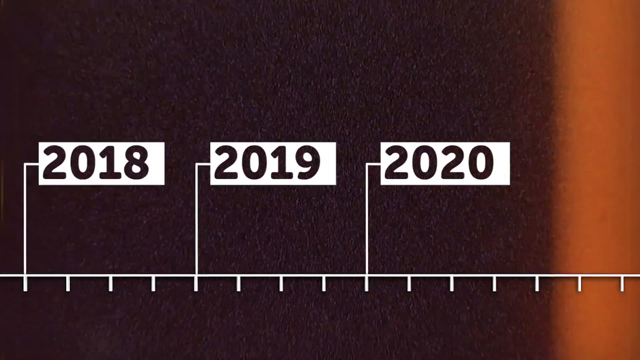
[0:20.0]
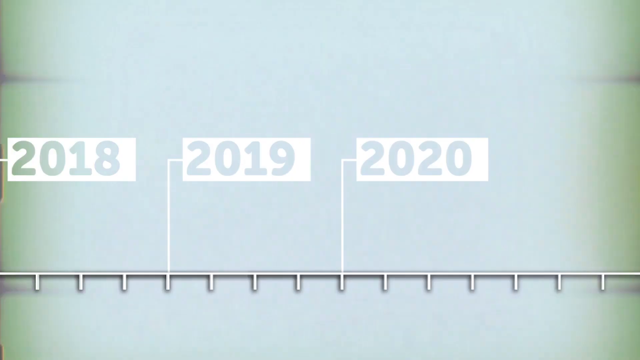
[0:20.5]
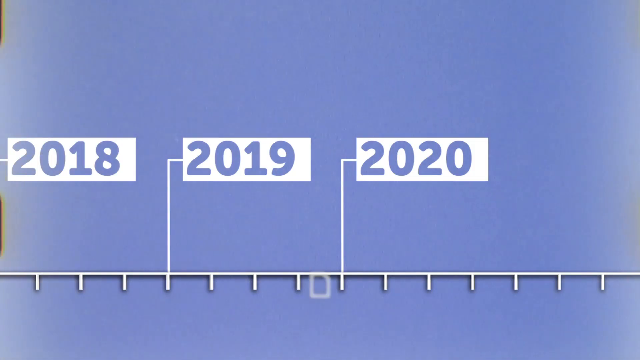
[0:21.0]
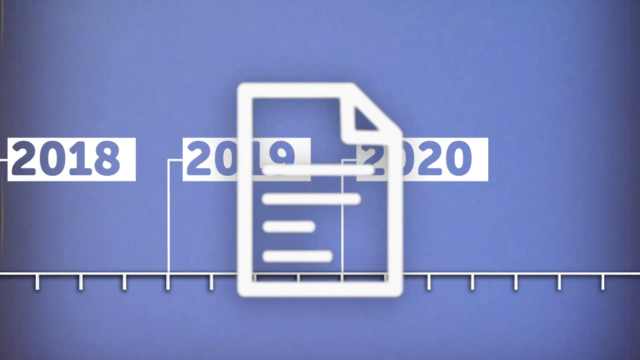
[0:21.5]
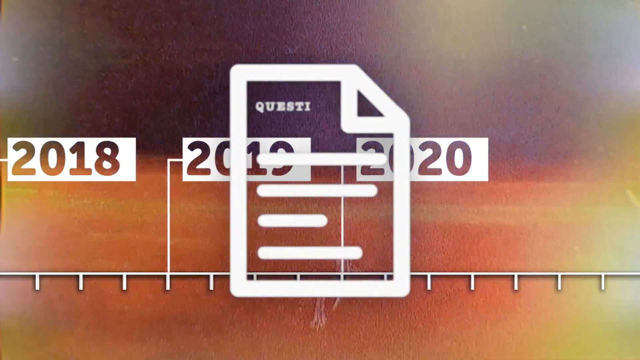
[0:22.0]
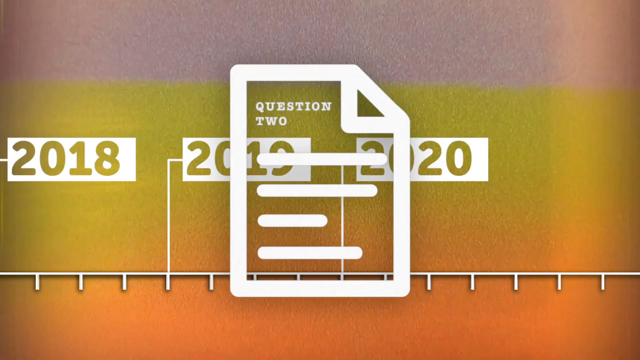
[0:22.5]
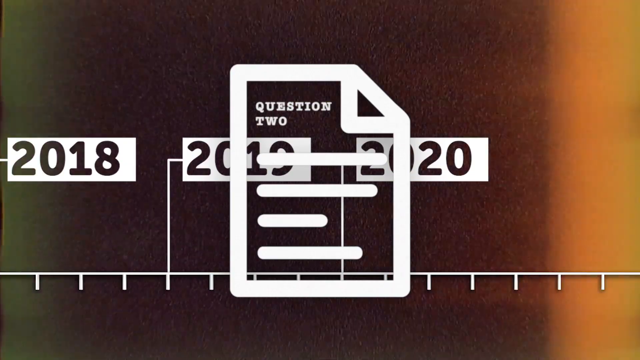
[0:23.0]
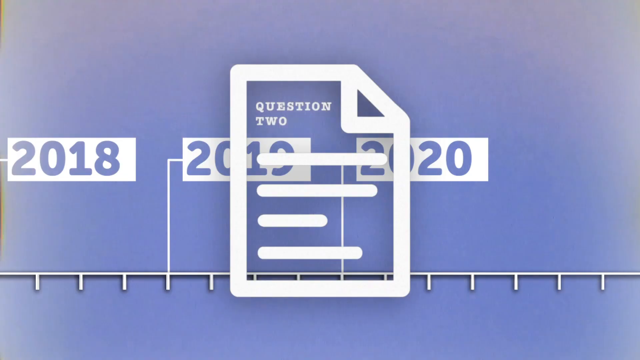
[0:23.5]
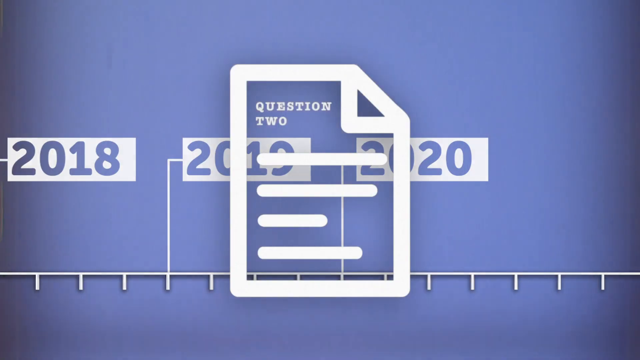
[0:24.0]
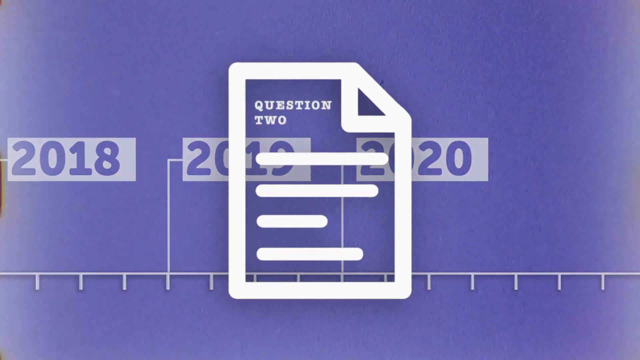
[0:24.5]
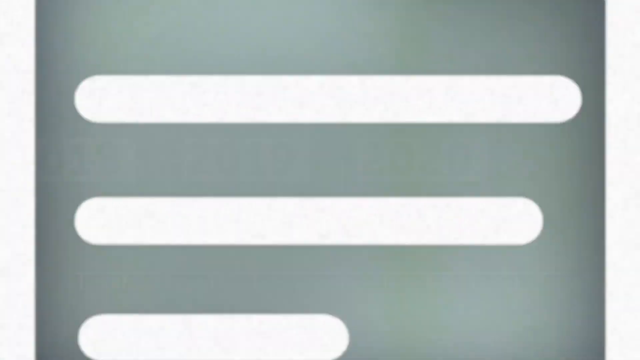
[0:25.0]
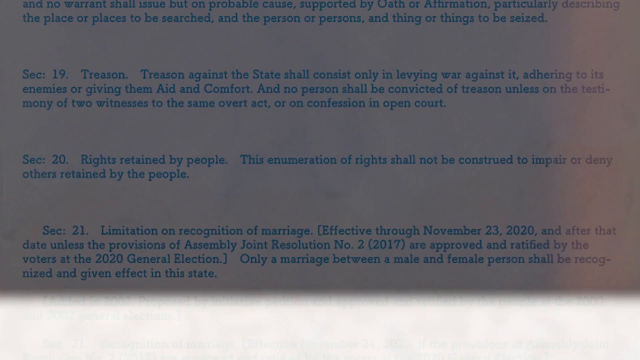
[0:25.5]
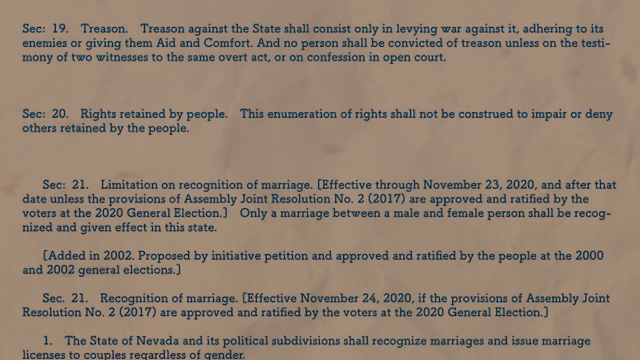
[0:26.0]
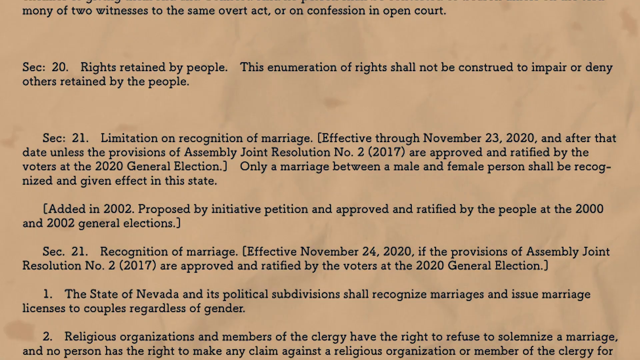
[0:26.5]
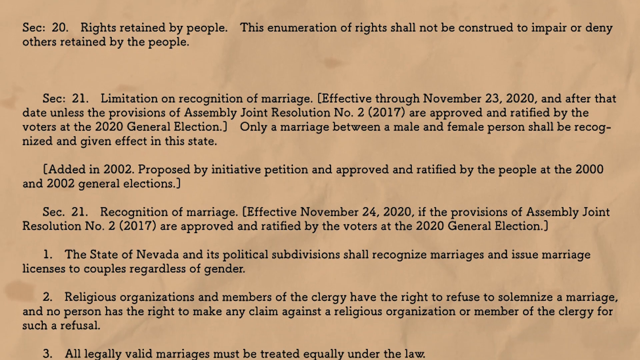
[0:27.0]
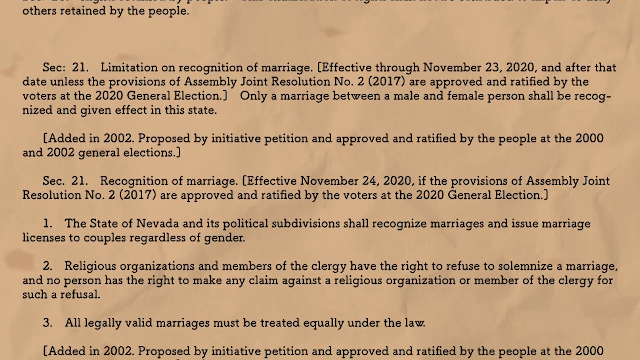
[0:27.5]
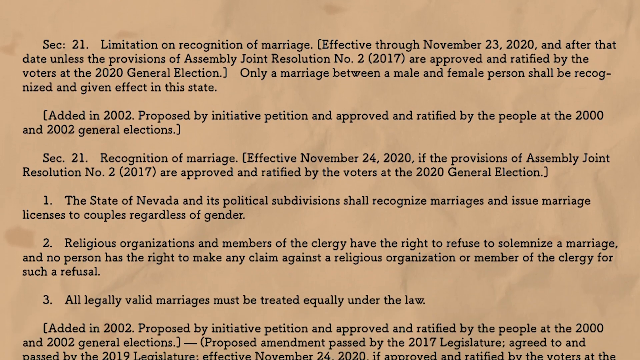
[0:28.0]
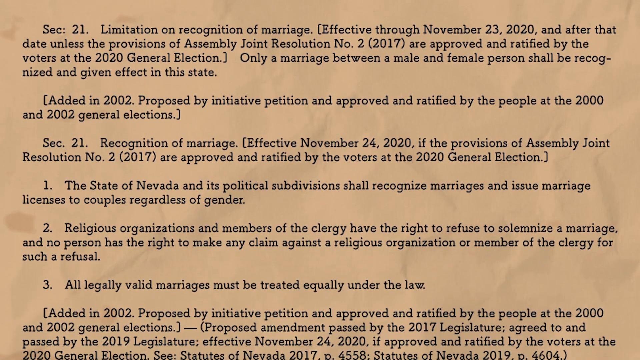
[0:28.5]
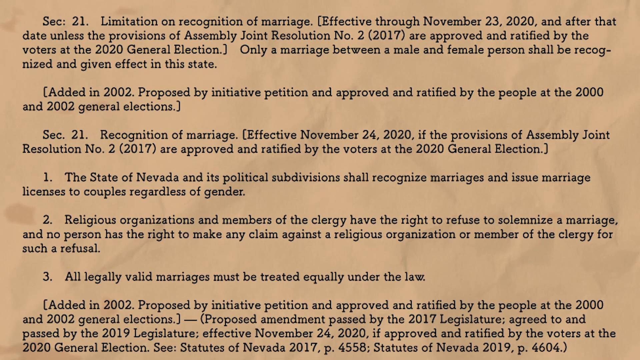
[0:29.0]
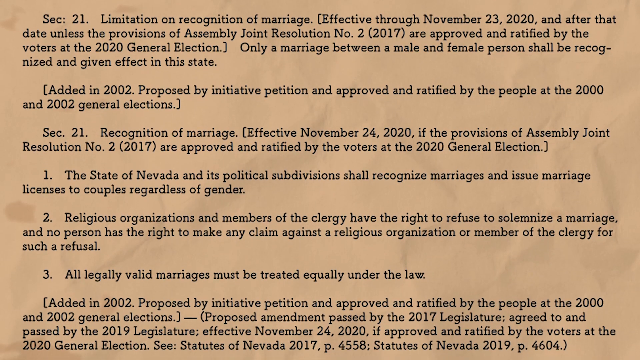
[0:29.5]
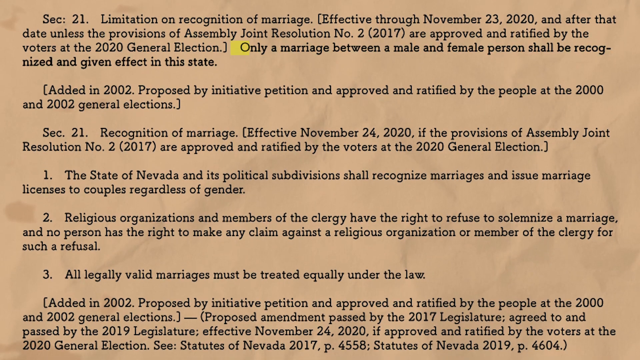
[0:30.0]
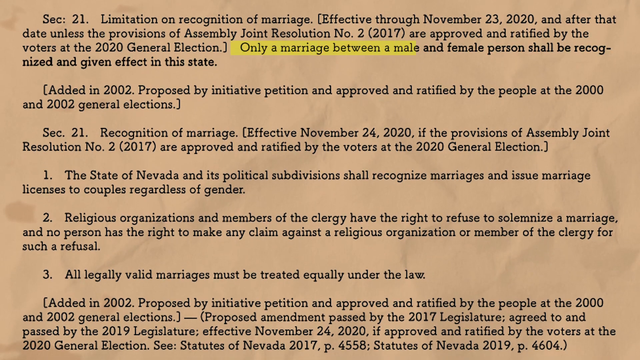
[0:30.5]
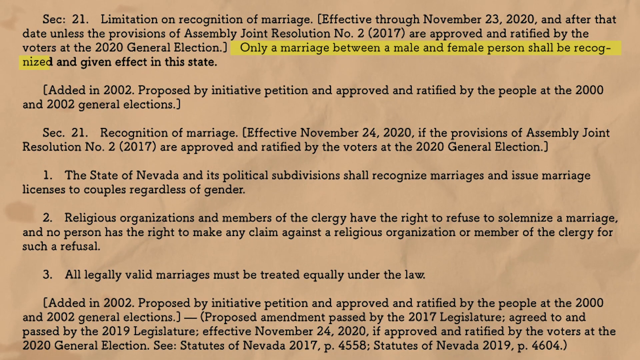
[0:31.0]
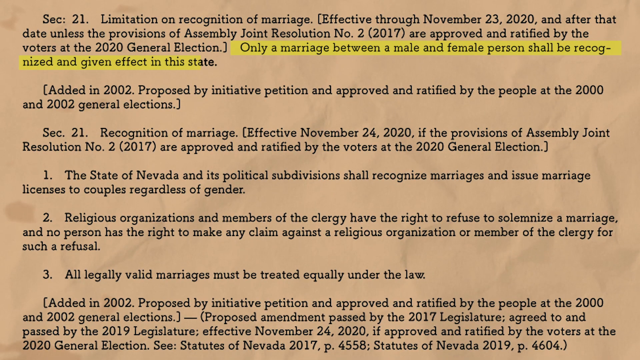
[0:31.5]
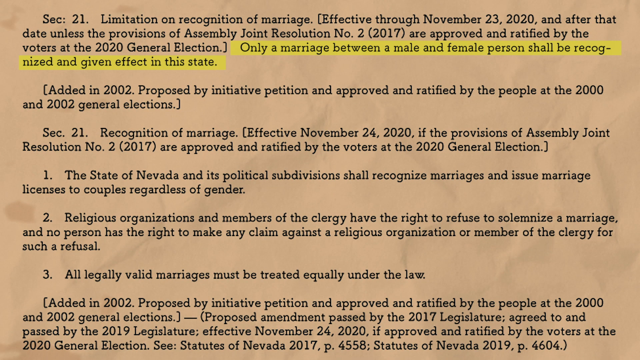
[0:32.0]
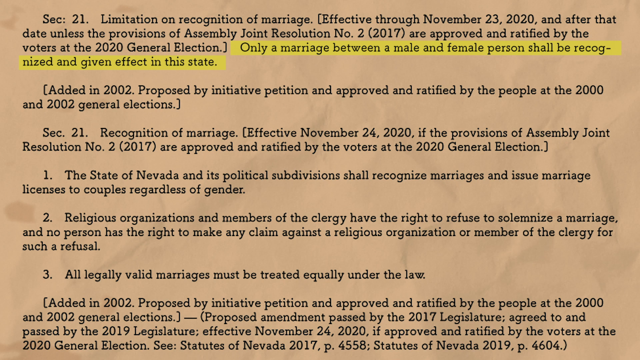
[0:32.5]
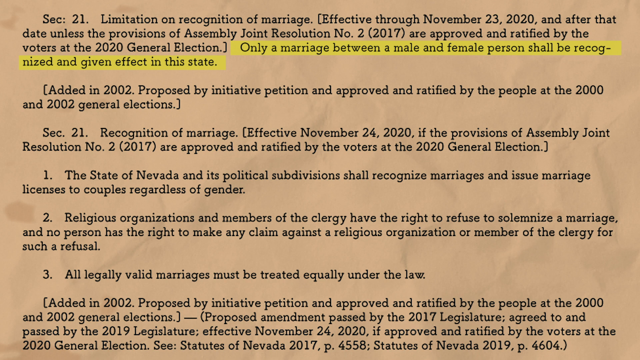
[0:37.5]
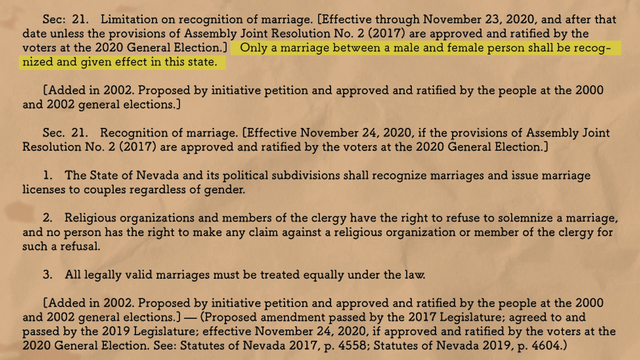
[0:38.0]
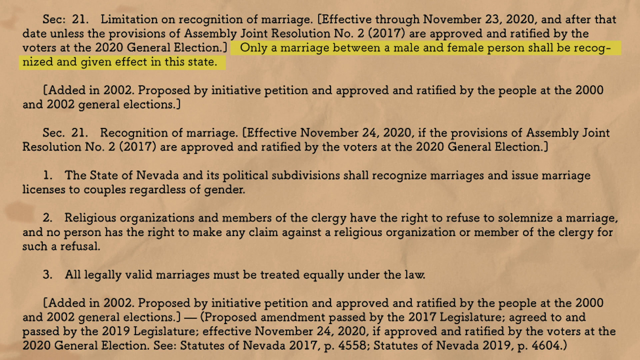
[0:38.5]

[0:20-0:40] A line scale shows the years 2018, 2019 and 2020, with a difference of three line cubes between 2018 and 2019 and three straight lines between 2019 and 2020. The background colour then changes from purple to blue, and in front of it there appears to be a question 2 and a file symbol like those seen on laptops. Next, a legal document with sections is shown: section 20 concerns rights retained by people, section 21 concerns limitations on recognition of marriage, and another section 21 concerns recognition of marriage. The sections have effective dates written in them: one section 21 is effective 23 November 2020, another 24 November 2020, and another November 24, 2020.